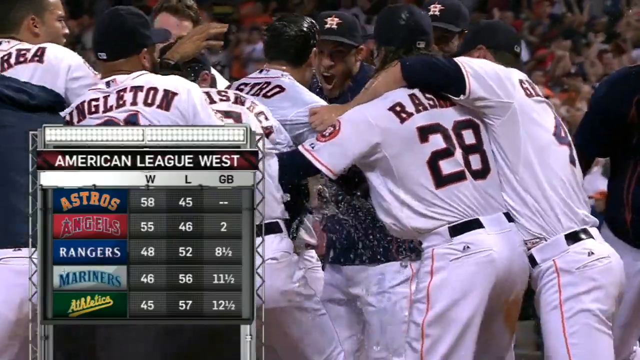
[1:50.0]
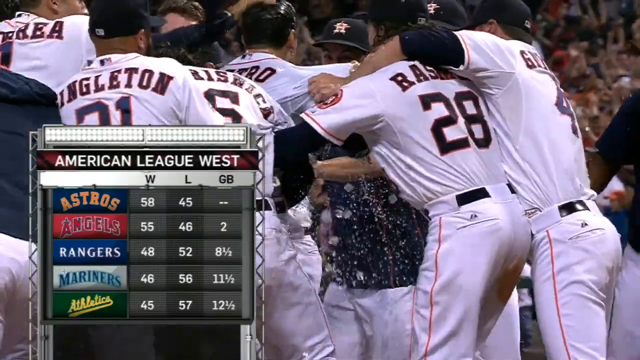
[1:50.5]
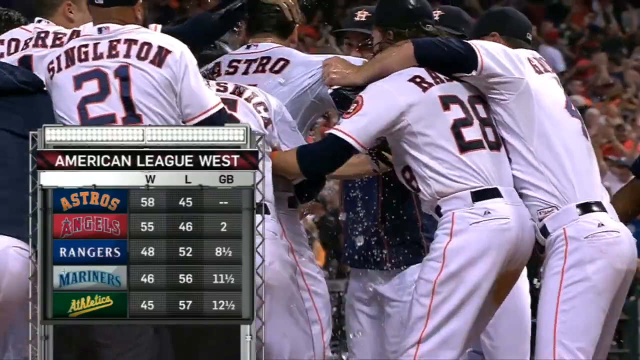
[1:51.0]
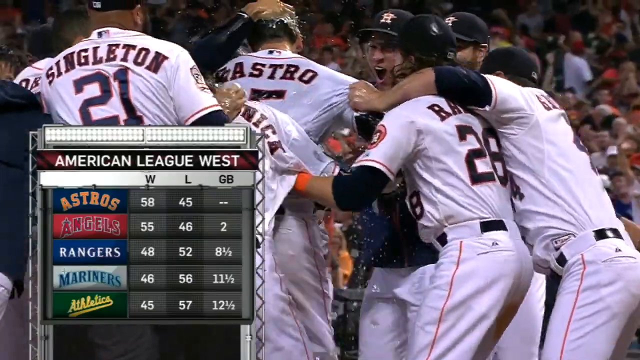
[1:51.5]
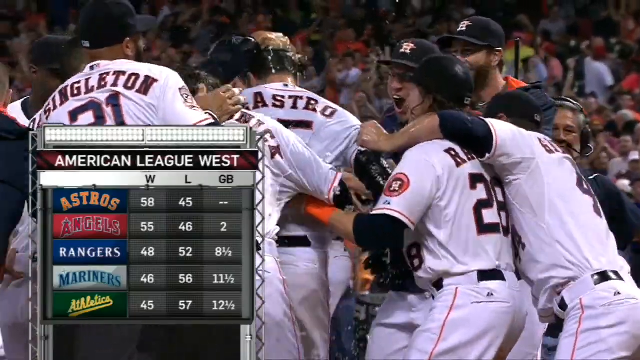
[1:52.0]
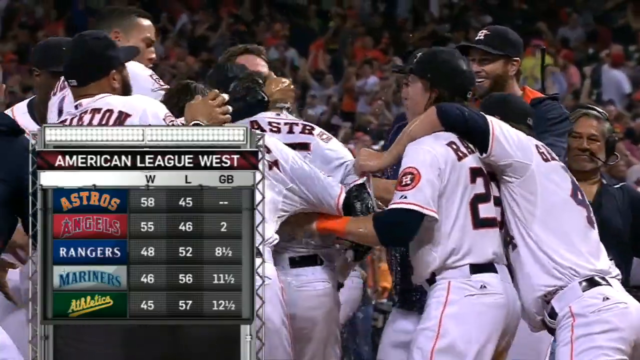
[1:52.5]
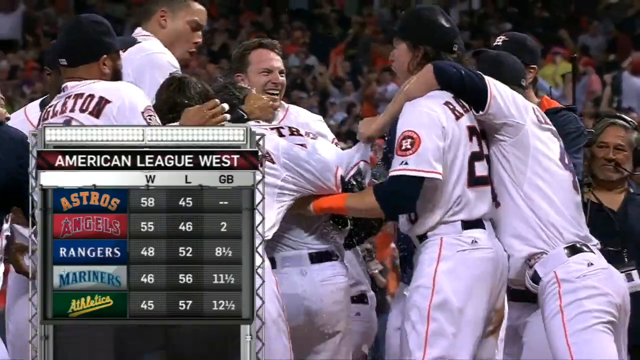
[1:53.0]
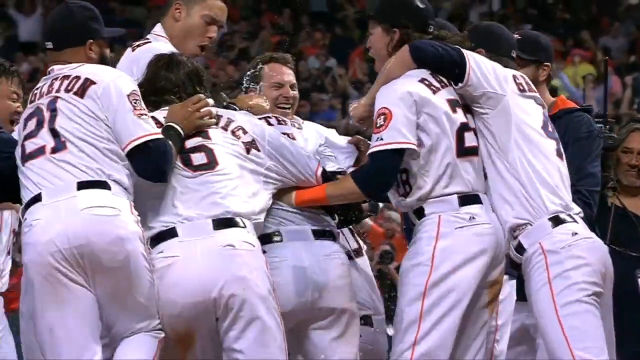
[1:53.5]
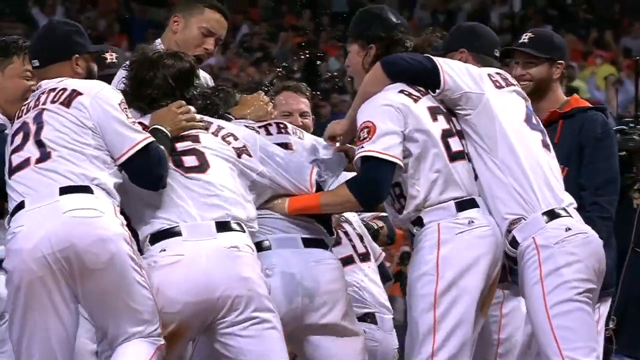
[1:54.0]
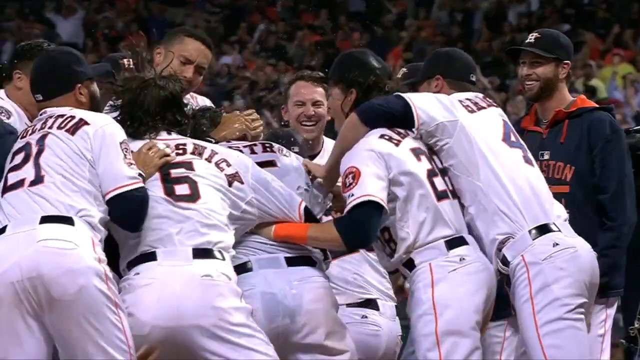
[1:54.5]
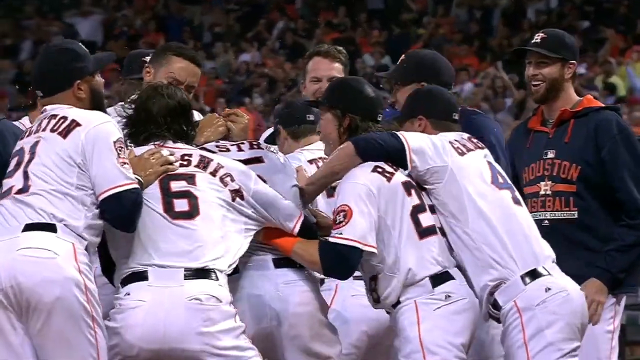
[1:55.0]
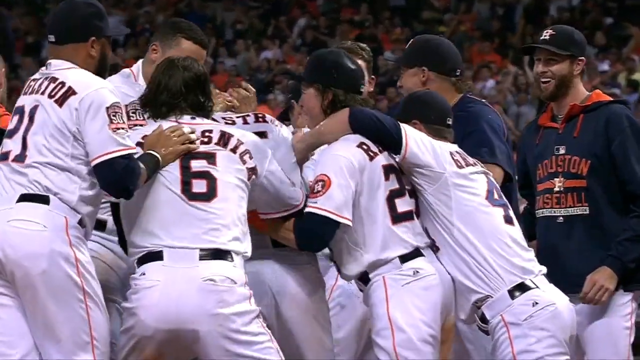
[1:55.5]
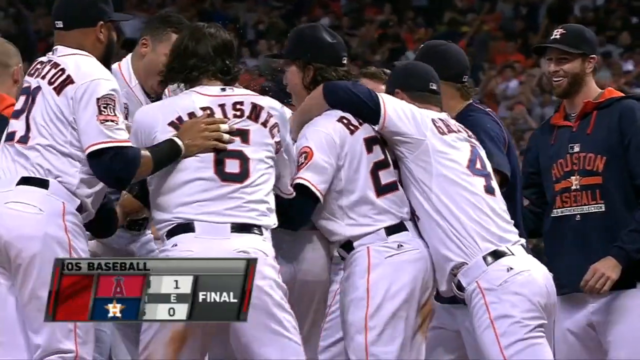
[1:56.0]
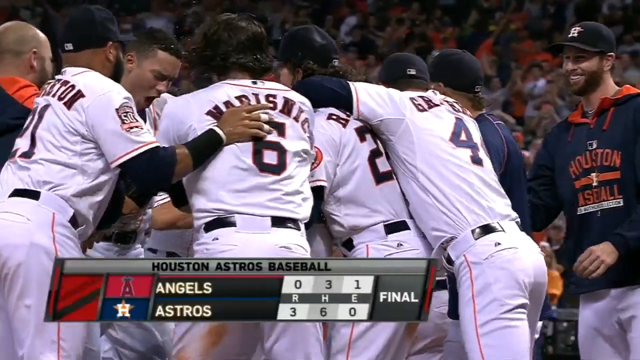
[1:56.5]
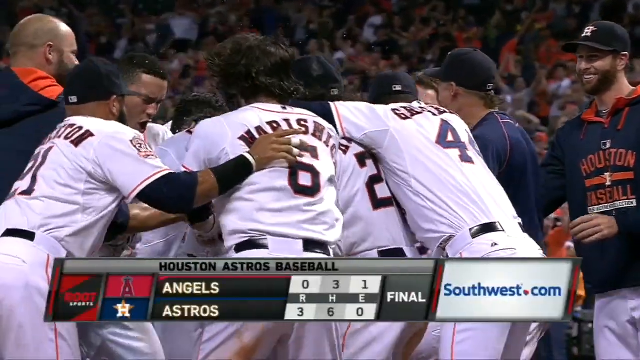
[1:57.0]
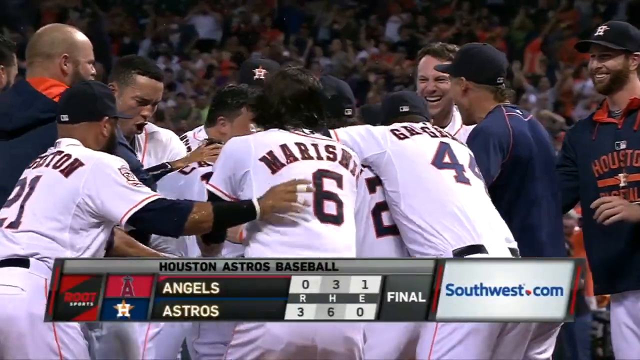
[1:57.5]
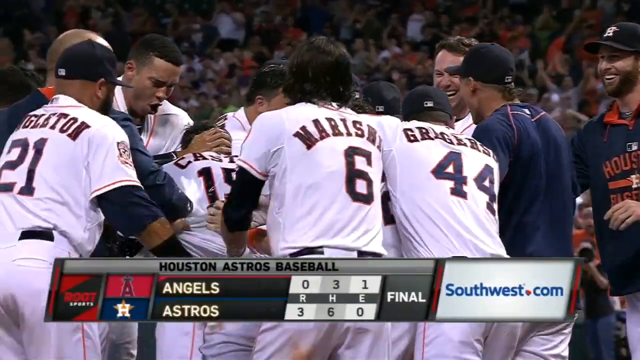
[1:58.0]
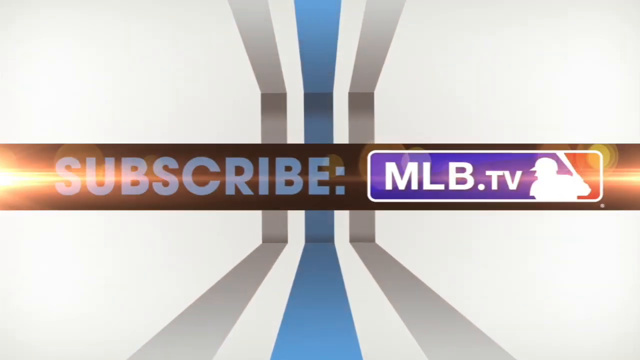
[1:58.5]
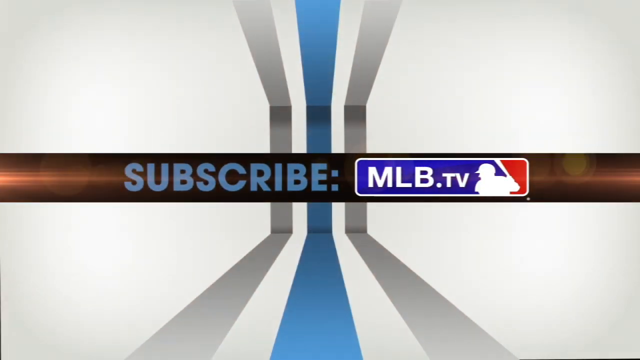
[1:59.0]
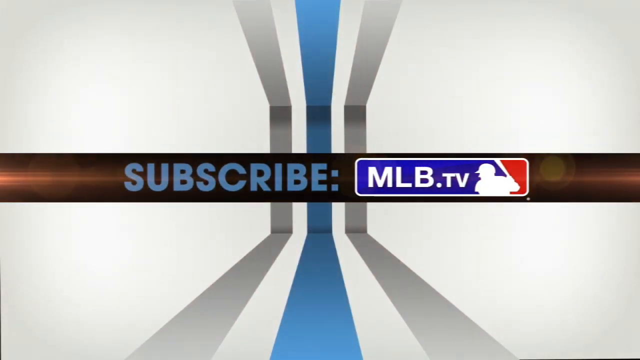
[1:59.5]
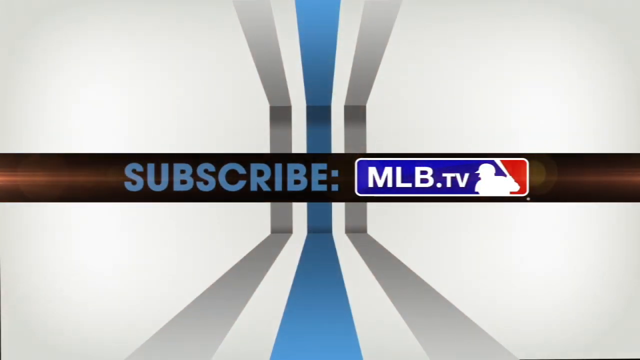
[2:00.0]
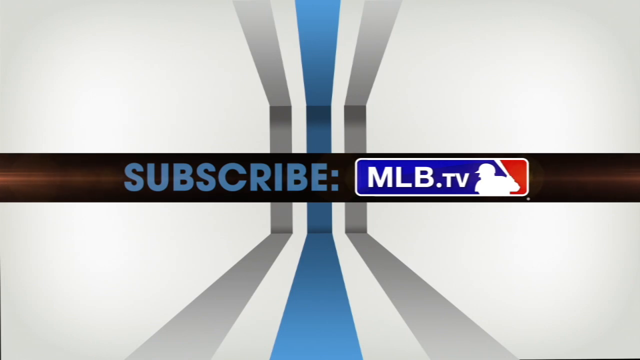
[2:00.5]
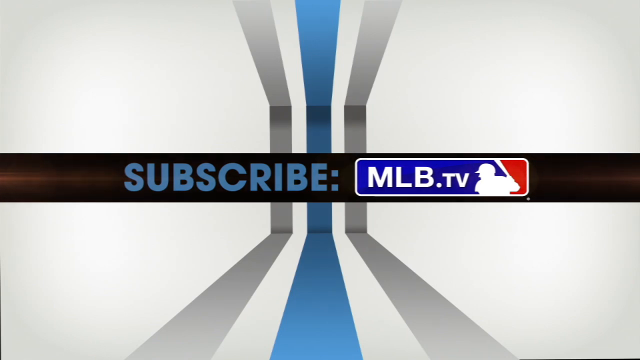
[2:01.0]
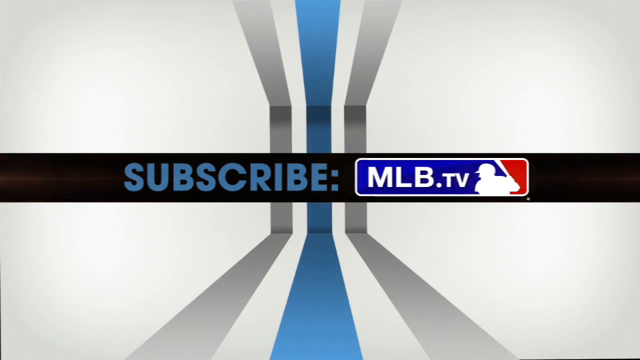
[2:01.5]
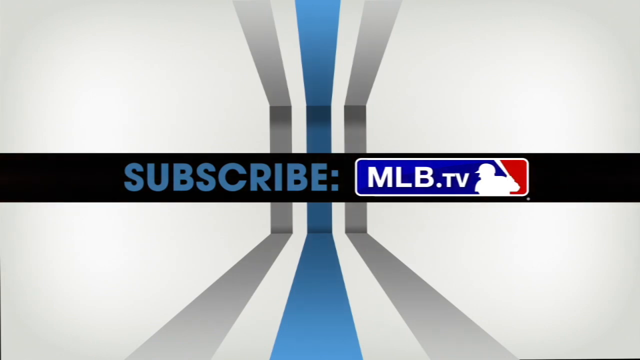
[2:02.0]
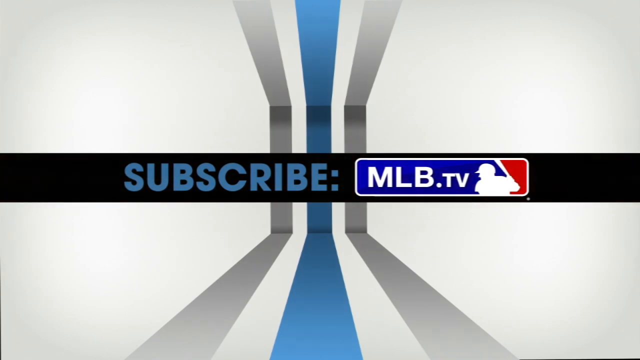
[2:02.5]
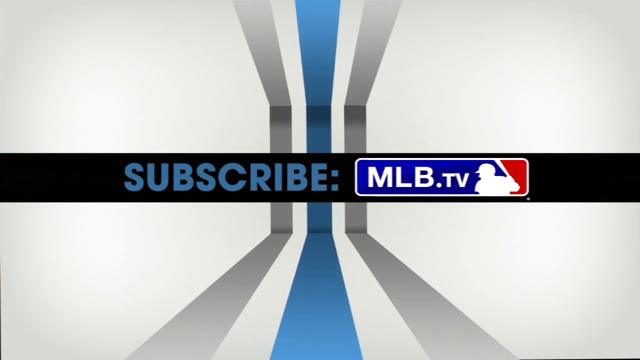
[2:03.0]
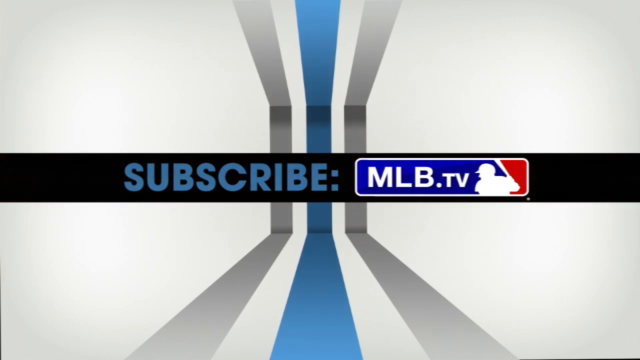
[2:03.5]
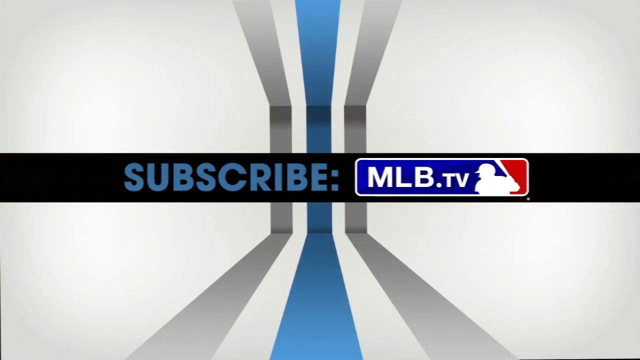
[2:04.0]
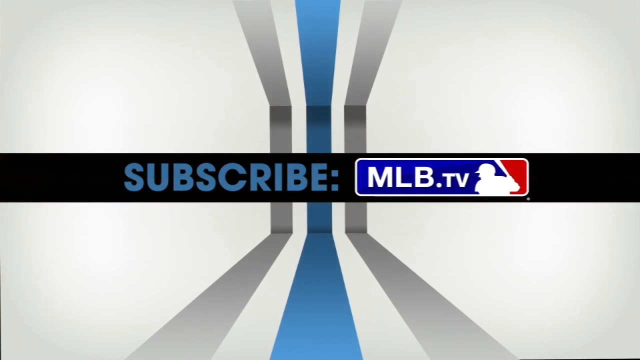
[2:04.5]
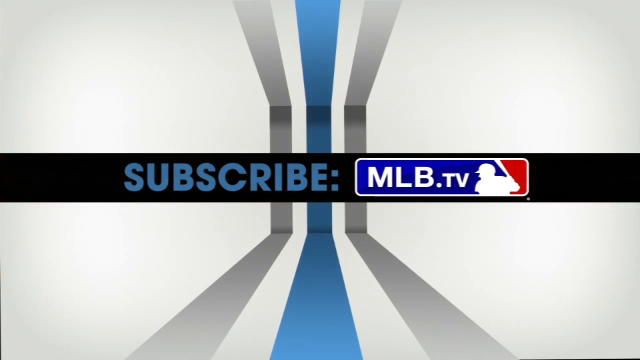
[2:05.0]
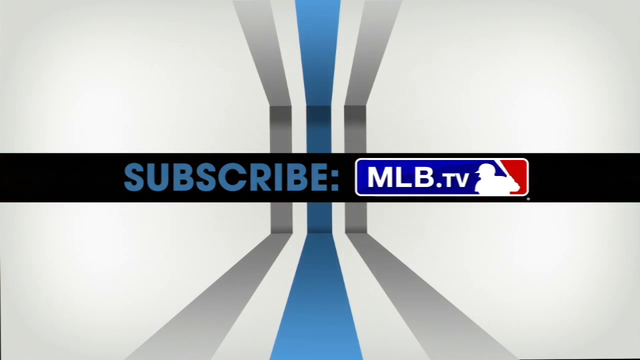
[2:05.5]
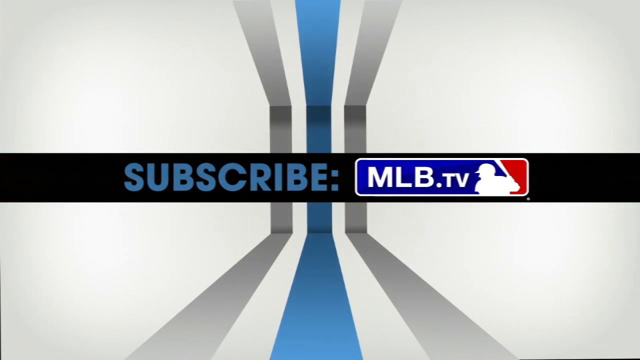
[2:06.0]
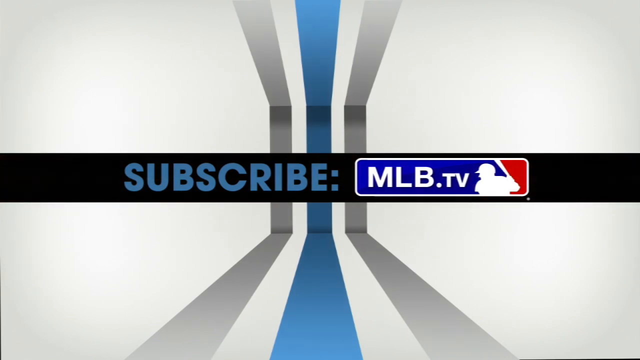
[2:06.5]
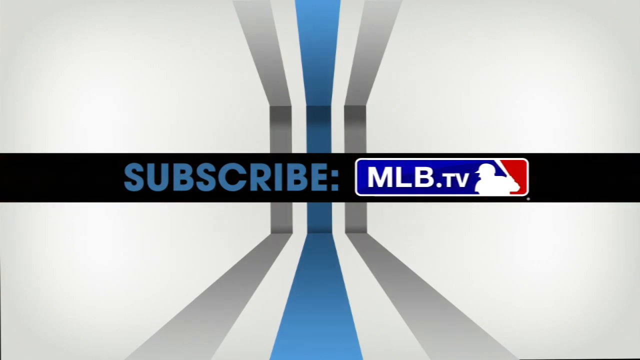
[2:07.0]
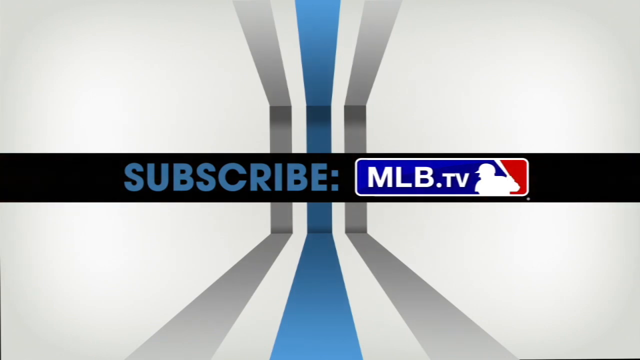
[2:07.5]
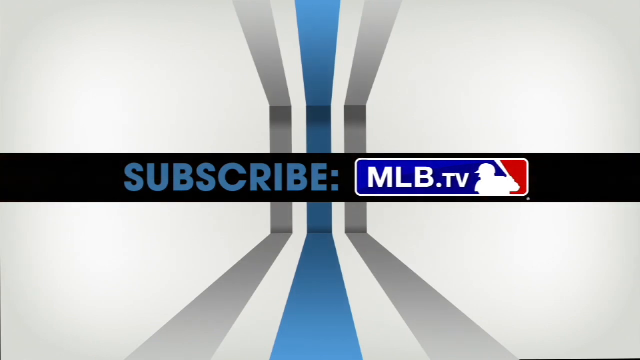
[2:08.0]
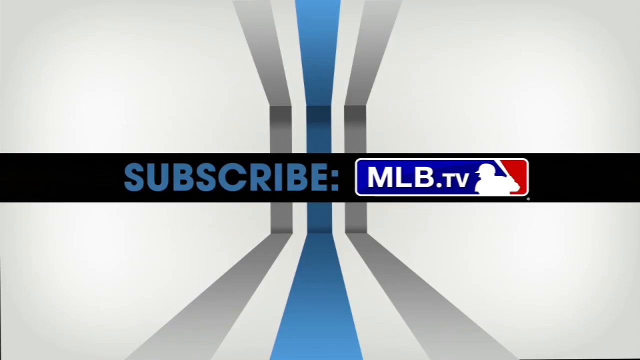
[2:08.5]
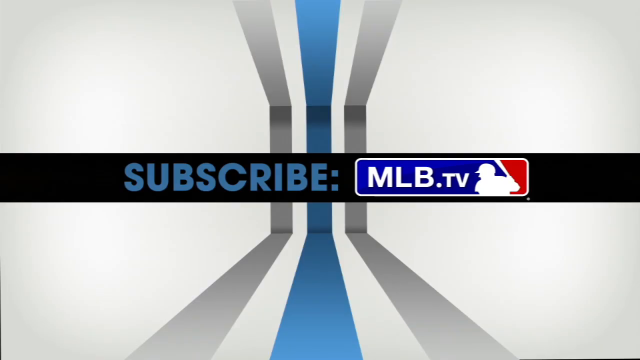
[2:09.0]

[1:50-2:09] The Houston Astros team celebrates the walk-off home run that gave them a two-game lead in the American League West, putting them at 58 wins on the season, two games ahead of the Los Angeles Angels. The screen lists each American League West team with its logo: the Astros in blue and orange, the Angels in red with dark red, the Rangers below in blue and white, the Mariners in teal and gray, and the Oakland Athletics in last place in yellow lettering with an underline. A marquee at the bottom, sponsored by Southwest.com, shows the final box score of the Astros beating the Angels three to nothing, and the top of the marquee states that it is from Houston Astros baseball.